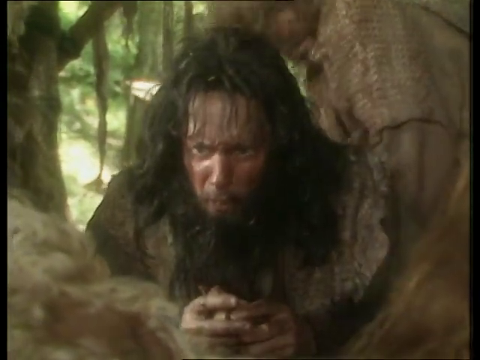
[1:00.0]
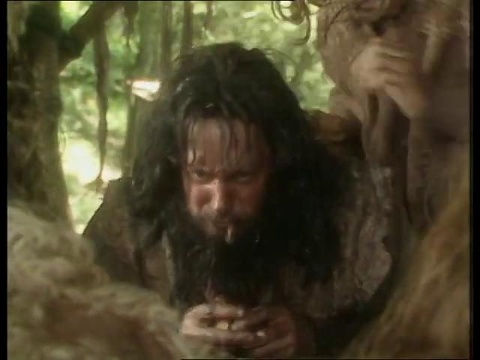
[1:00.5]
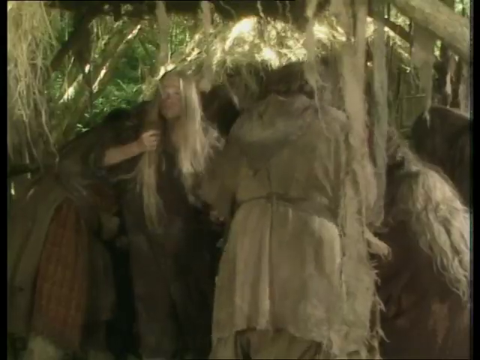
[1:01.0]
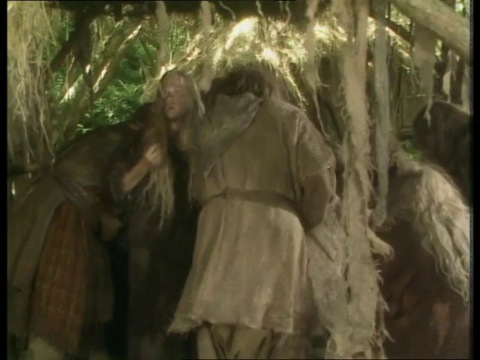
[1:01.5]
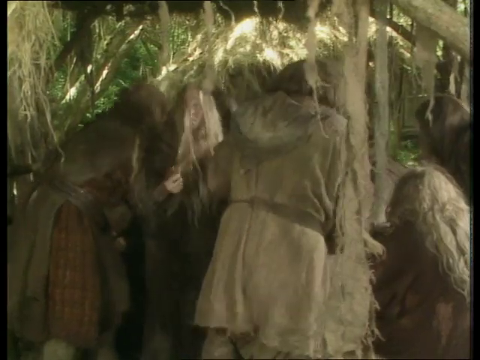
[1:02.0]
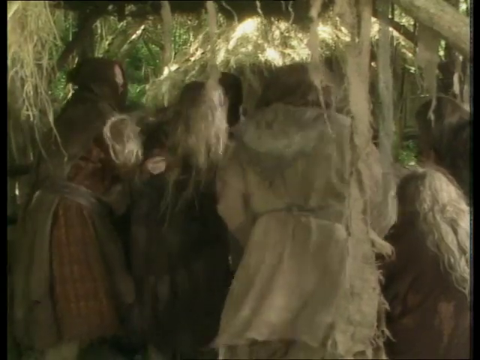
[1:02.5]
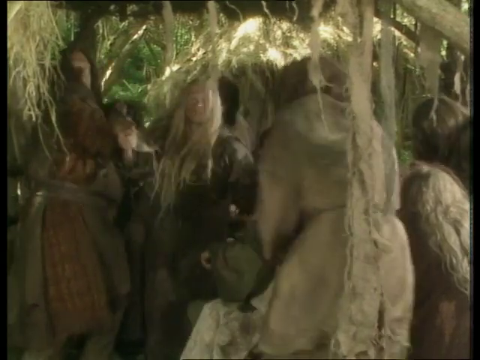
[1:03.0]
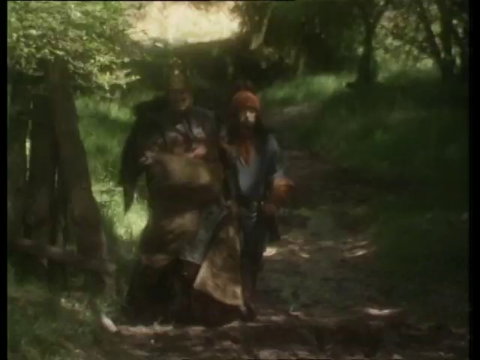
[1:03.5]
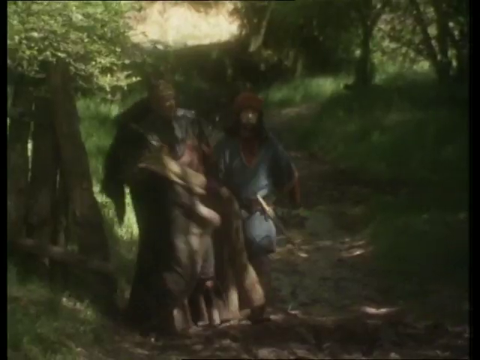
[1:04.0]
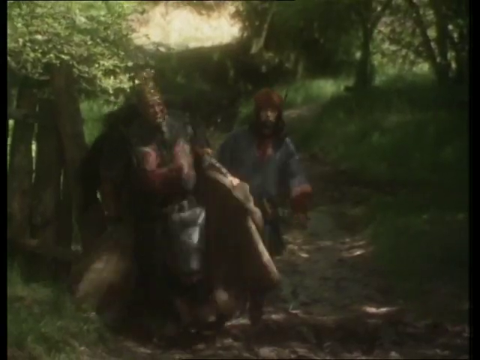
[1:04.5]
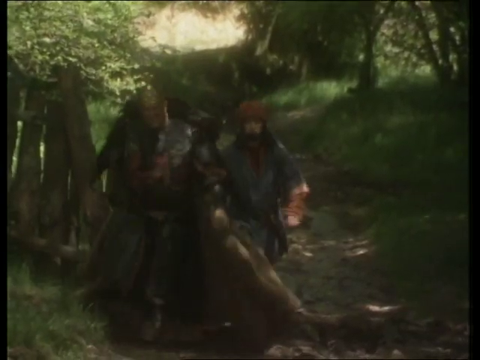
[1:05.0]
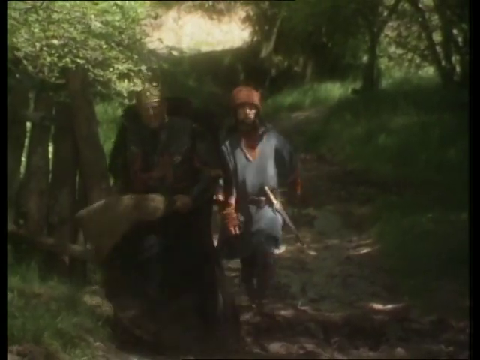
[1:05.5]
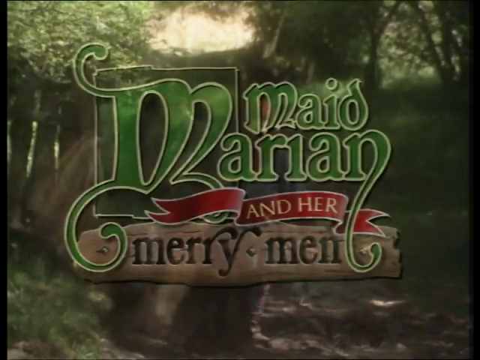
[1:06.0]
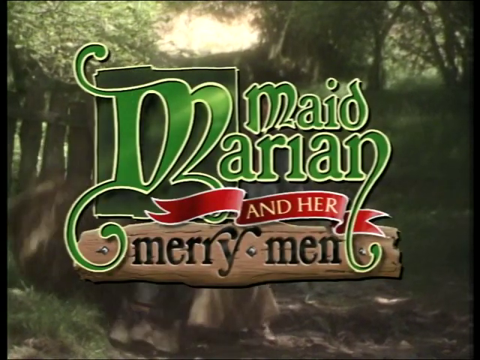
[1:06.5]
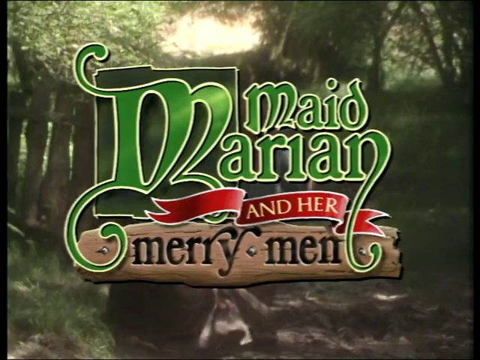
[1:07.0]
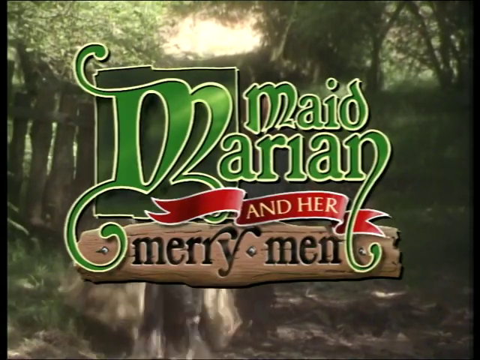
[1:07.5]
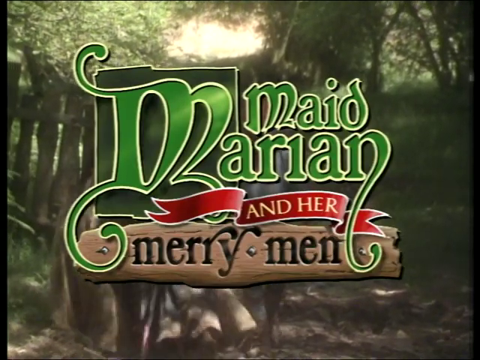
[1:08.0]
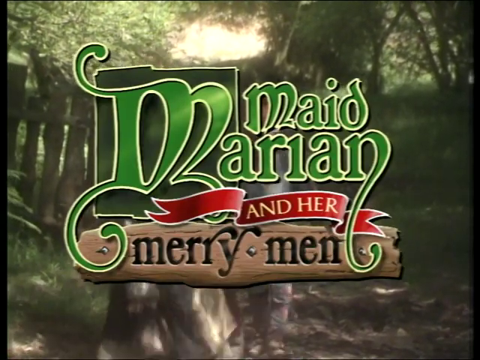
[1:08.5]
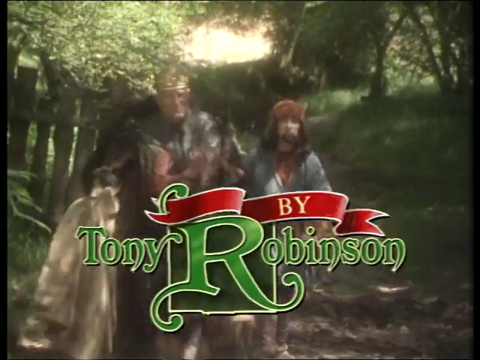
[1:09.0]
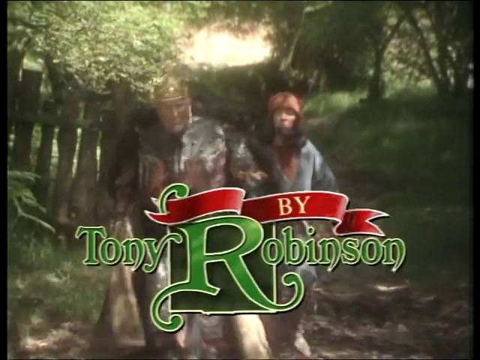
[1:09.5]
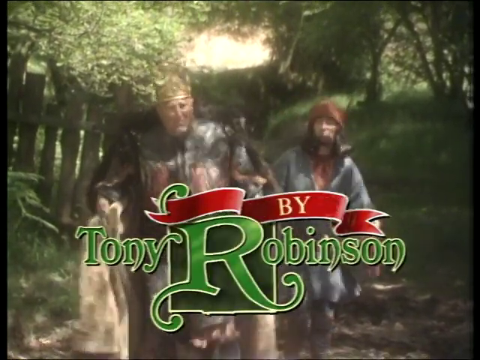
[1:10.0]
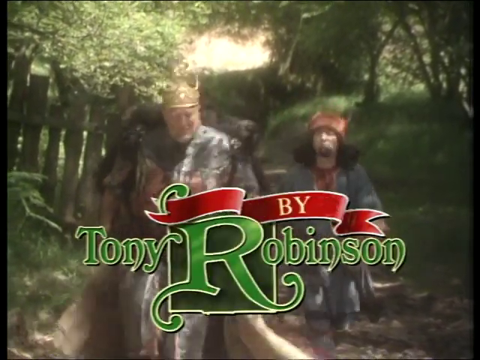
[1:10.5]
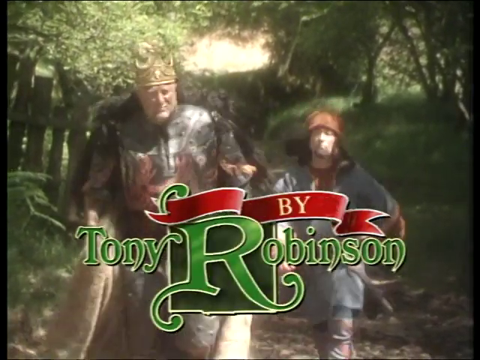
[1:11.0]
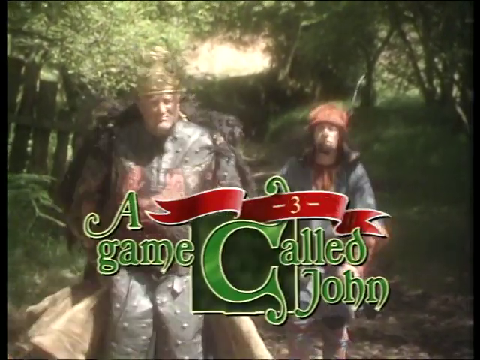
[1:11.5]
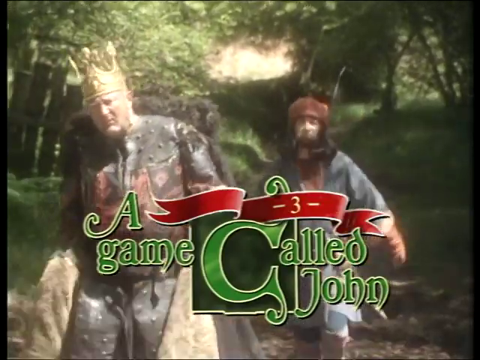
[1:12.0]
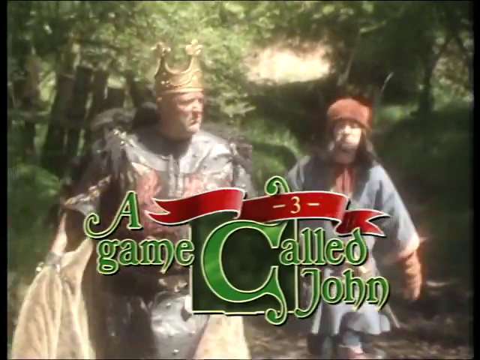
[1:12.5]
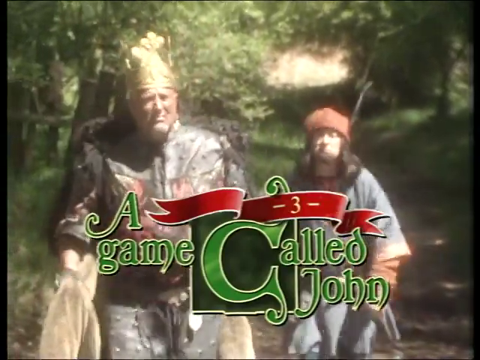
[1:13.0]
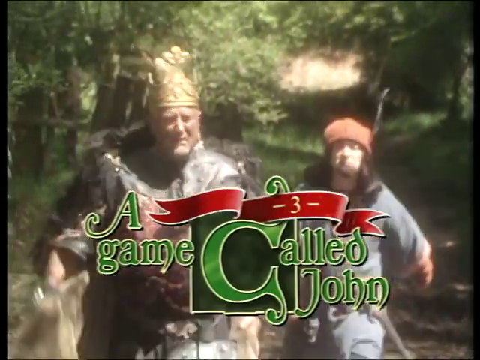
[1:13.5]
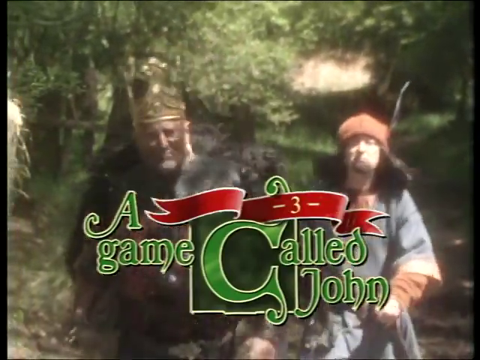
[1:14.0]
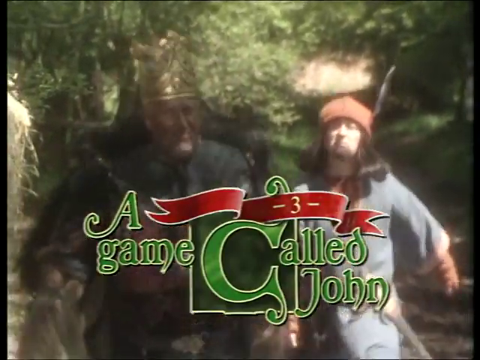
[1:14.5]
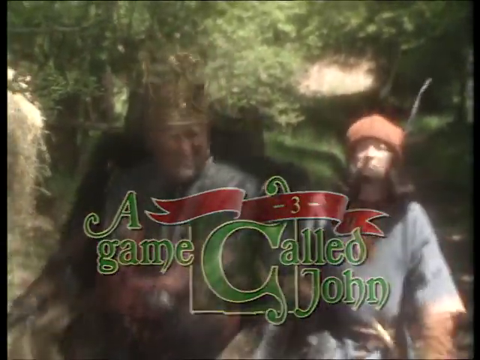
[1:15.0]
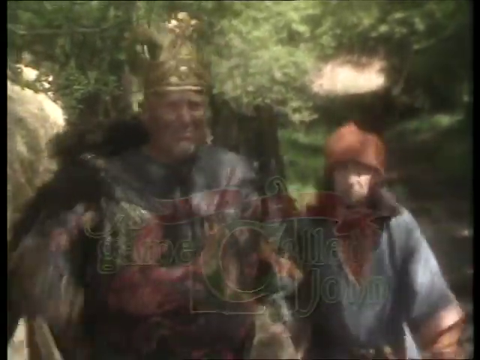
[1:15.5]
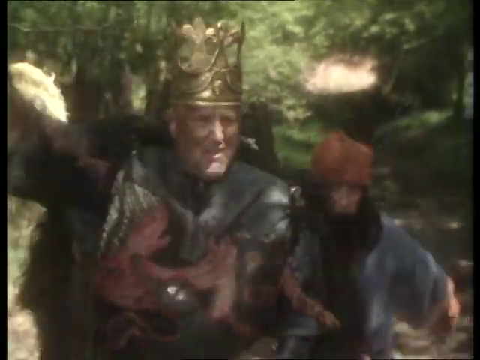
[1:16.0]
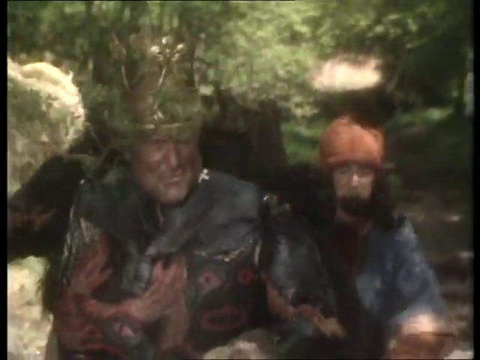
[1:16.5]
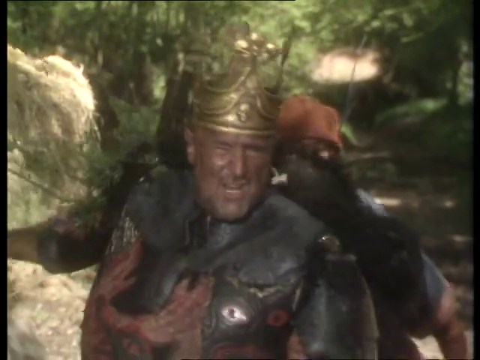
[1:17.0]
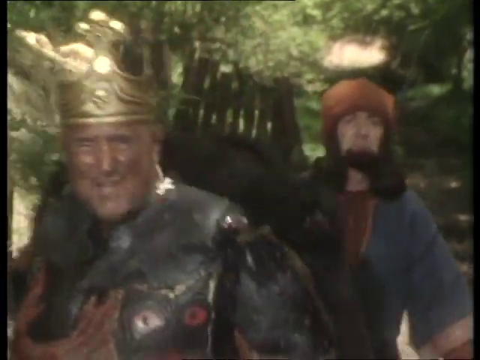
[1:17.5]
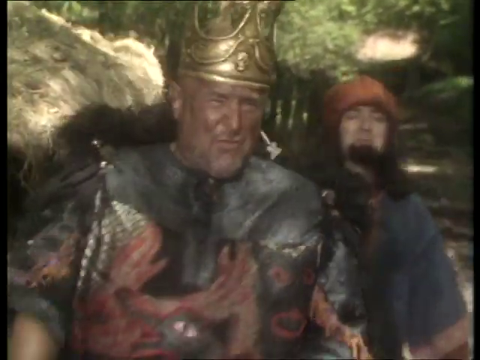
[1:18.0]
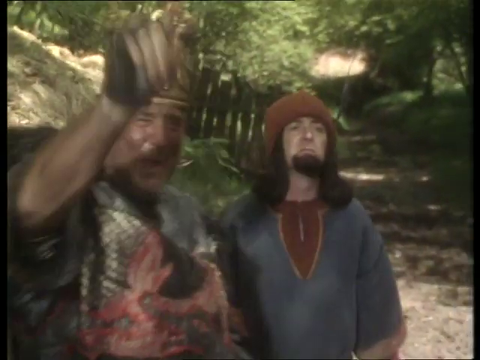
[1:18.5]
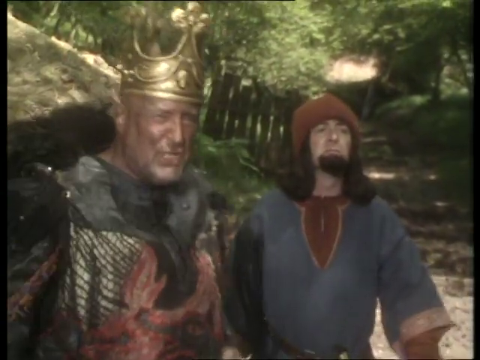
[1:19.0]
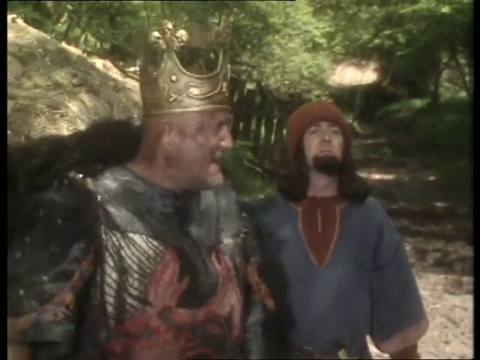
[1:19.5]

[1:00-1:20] A man with long, dirty black hair and a beard, with debris and dirt in his hair, eats some sort of food but spits it back out. A shot shows the people huddled around the food. The woman emerges from the huddle and looks up as if she sees something in the distance. With a hand around her chin, she slowly starts using her shoulder to nudge the people around her to get them to look in that direction, and some of them turn around. A man dressed like a king wears grayish armor with a king's robe around him that is black at the top and brown. Walking with him is another man in a red beanie, also in medieval gear, kind of dressed like a jester. They are walking on a dirt road, far from the camera, toward the camera. Green stylized text appears on the screen reading "Made Miriam and her merry men", with "merry men" on a cartoonish-looking piece of wood. Then text reads "By Tony Robinson". As the text appears, the king and the jester or squire walk closer to the camera.